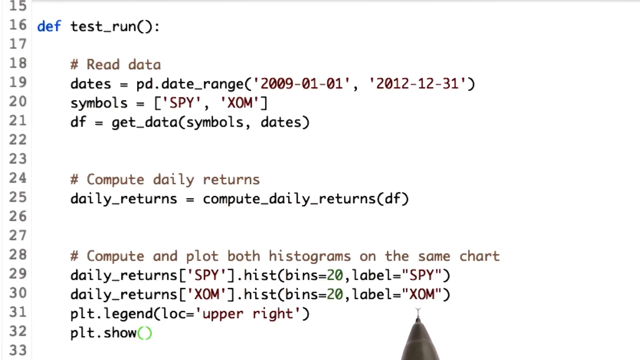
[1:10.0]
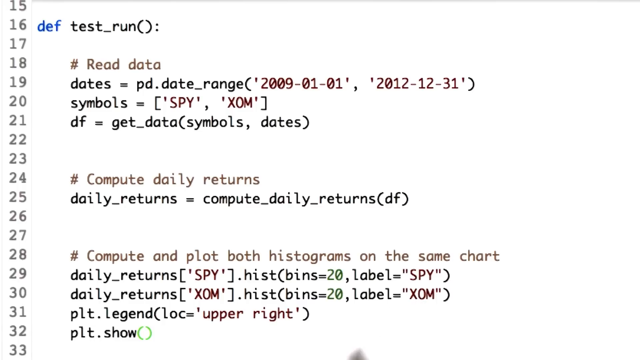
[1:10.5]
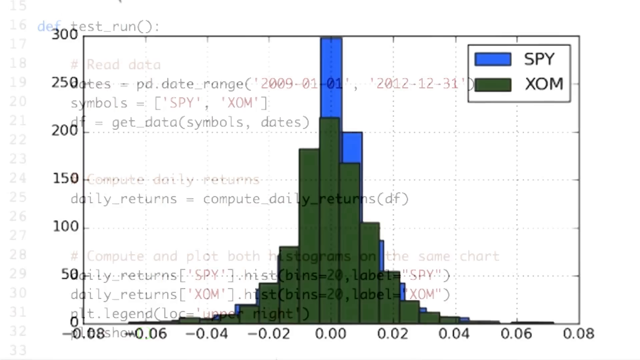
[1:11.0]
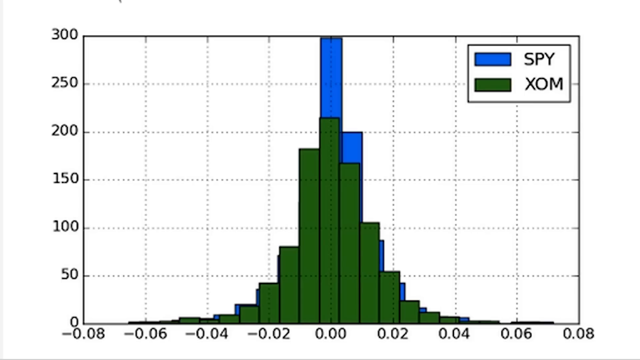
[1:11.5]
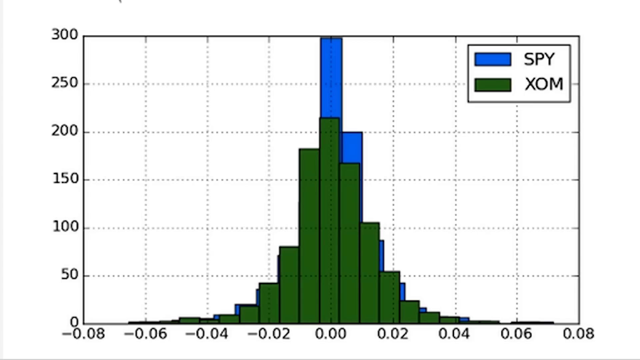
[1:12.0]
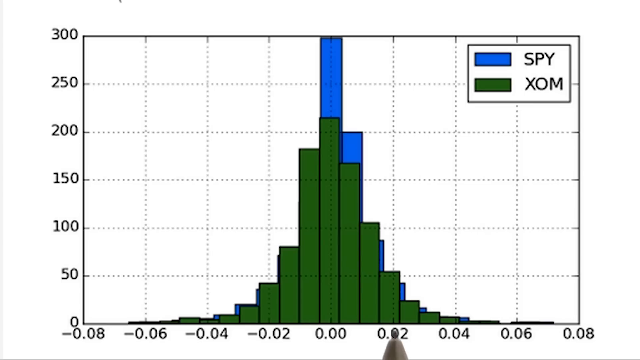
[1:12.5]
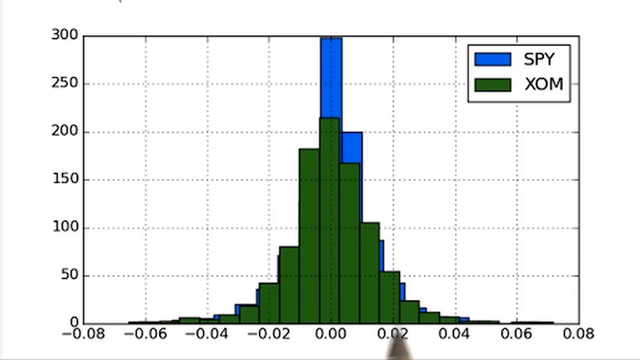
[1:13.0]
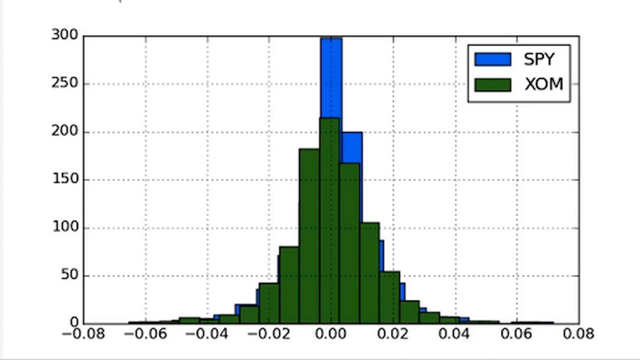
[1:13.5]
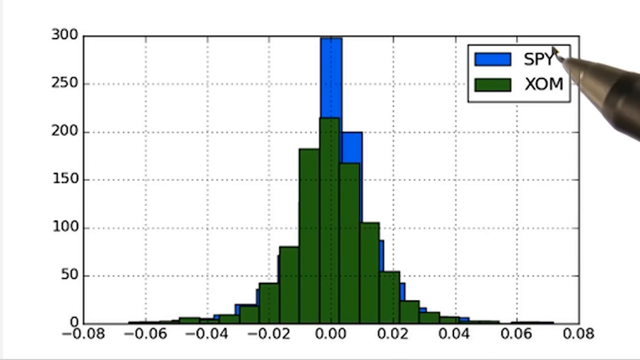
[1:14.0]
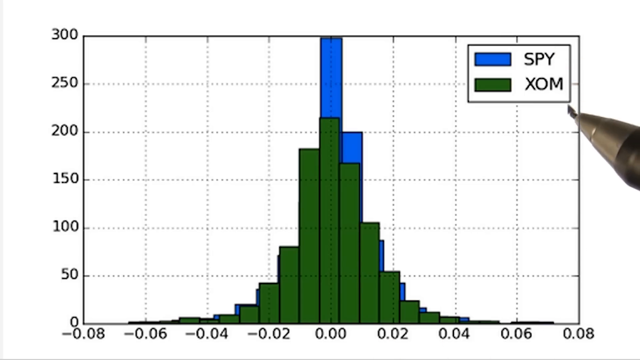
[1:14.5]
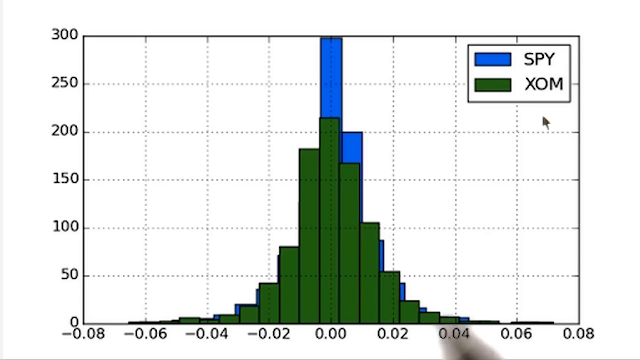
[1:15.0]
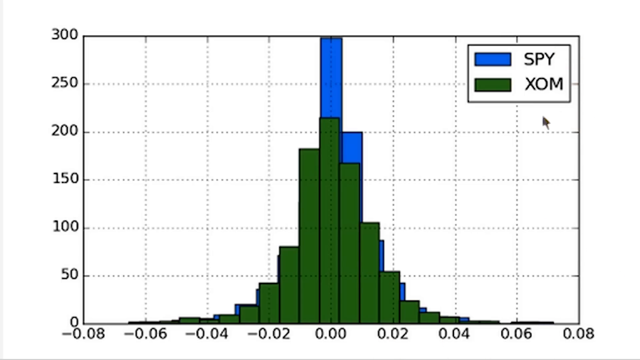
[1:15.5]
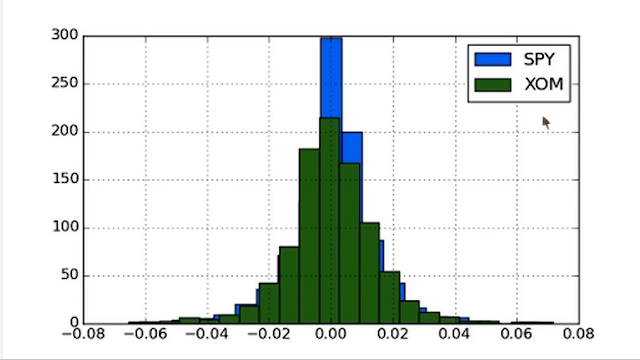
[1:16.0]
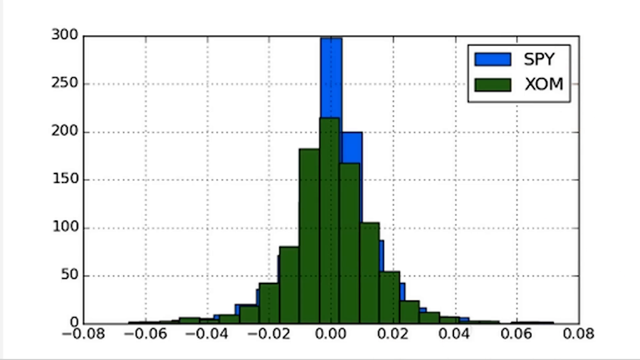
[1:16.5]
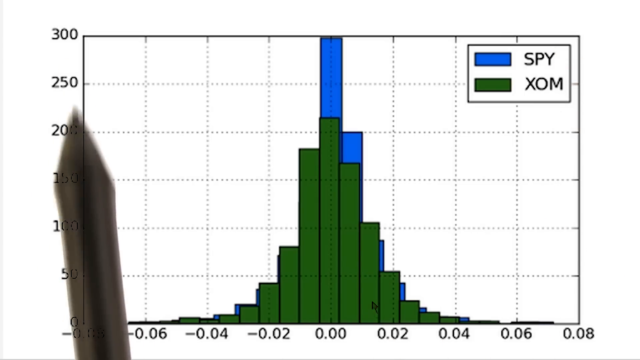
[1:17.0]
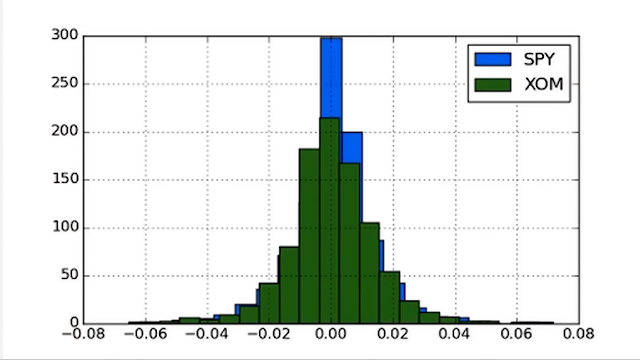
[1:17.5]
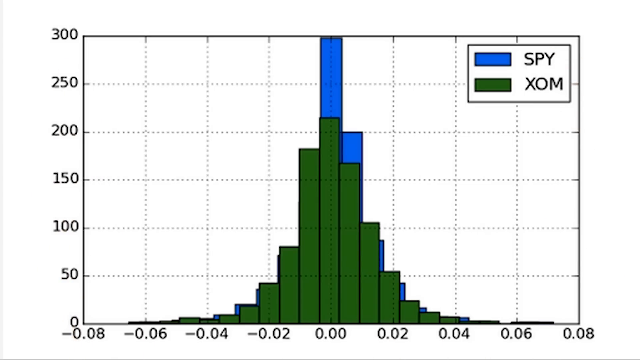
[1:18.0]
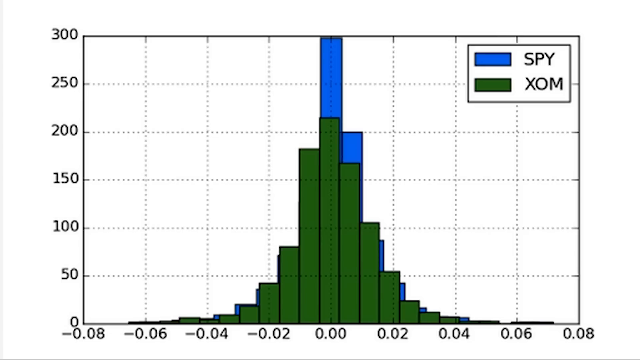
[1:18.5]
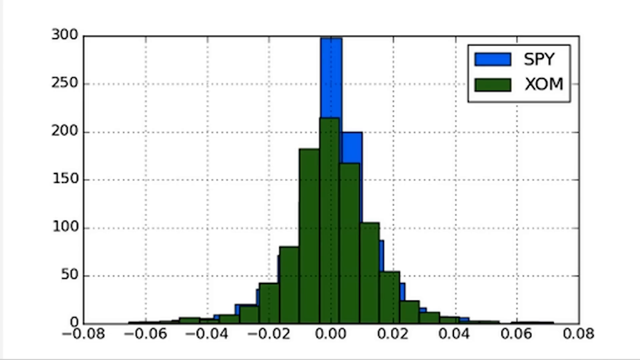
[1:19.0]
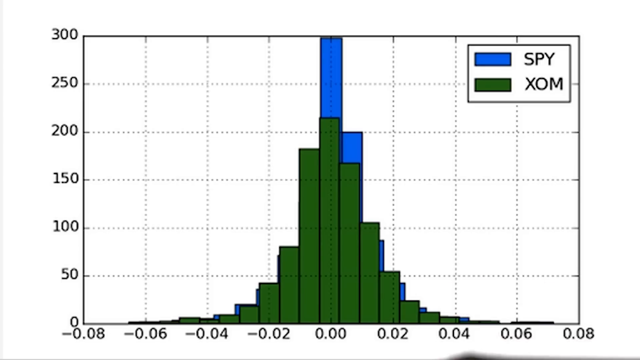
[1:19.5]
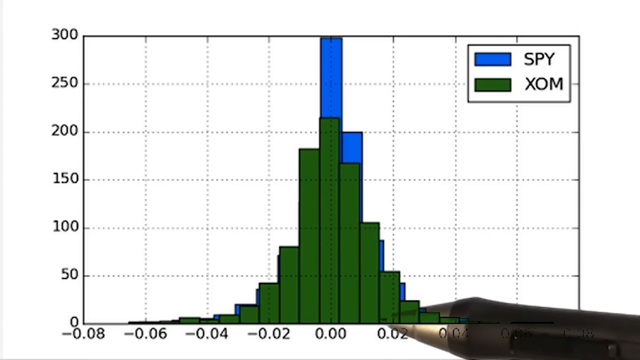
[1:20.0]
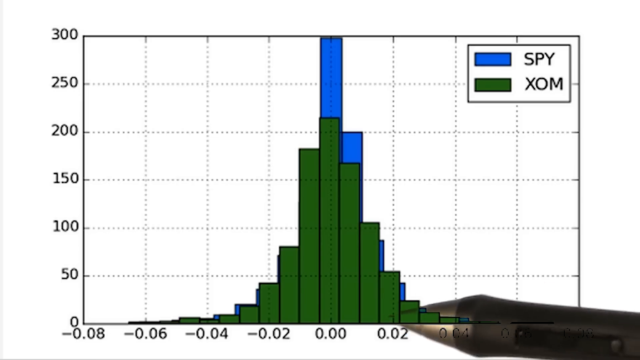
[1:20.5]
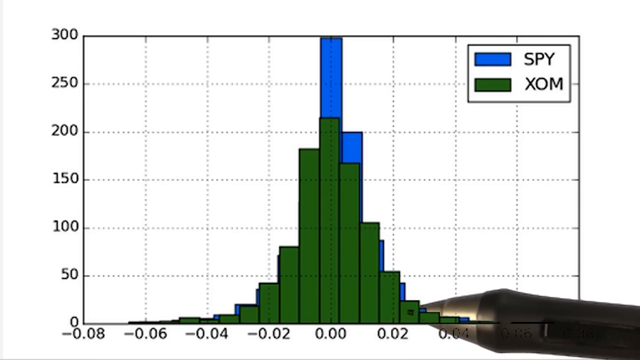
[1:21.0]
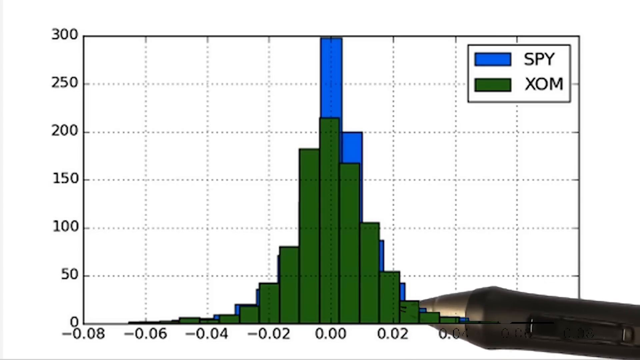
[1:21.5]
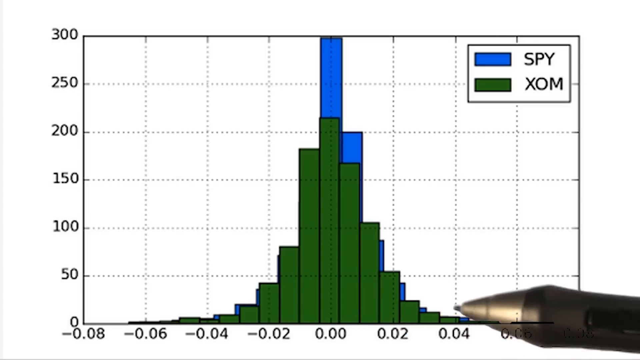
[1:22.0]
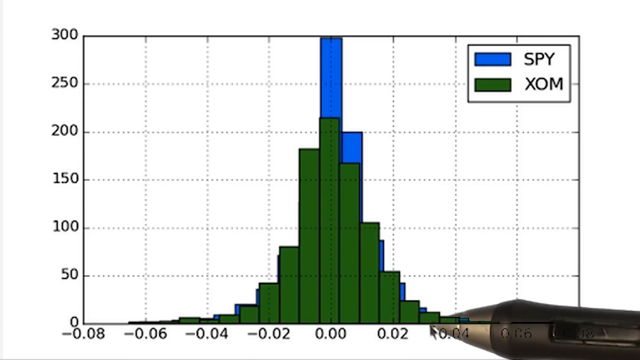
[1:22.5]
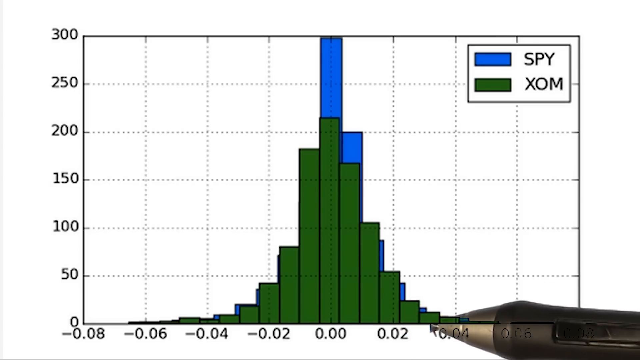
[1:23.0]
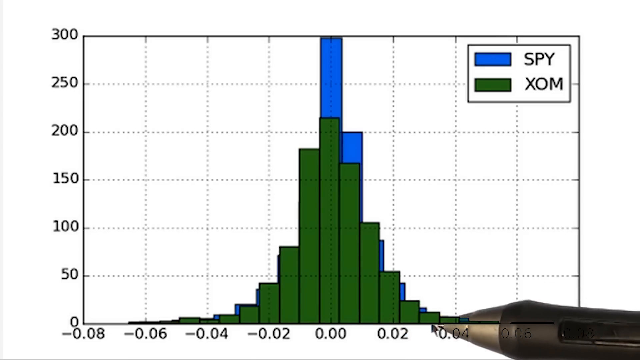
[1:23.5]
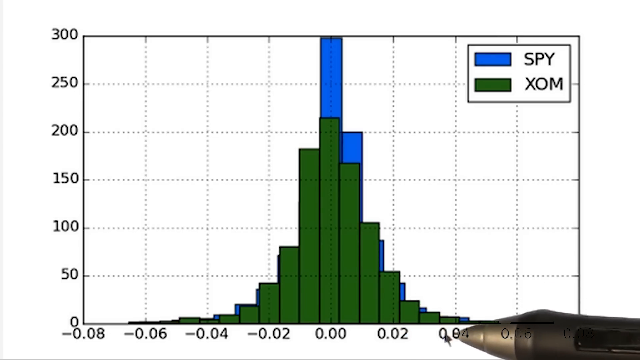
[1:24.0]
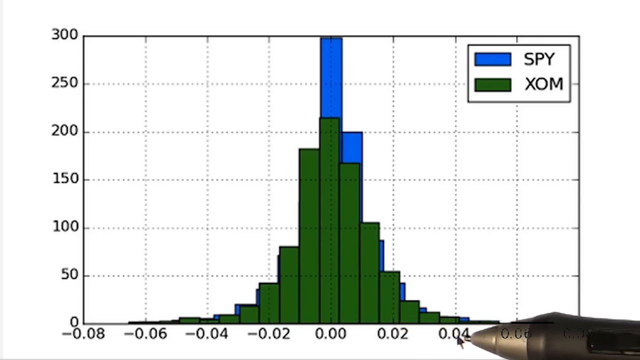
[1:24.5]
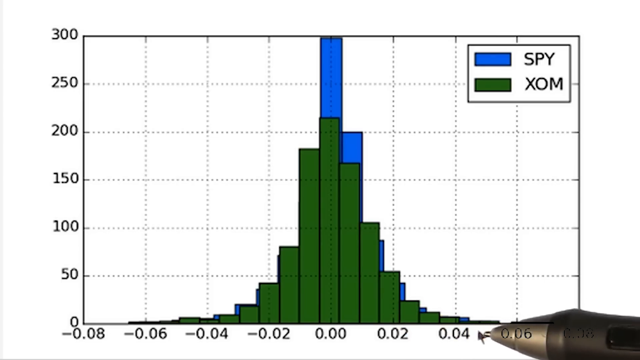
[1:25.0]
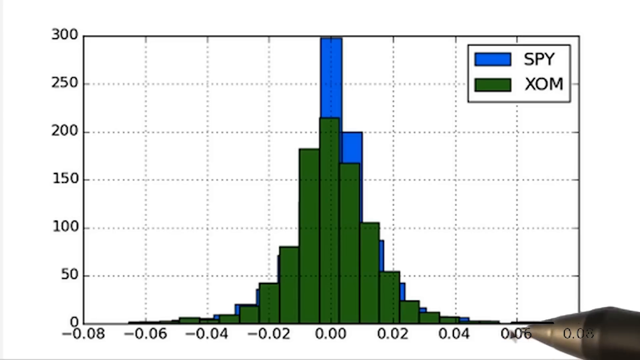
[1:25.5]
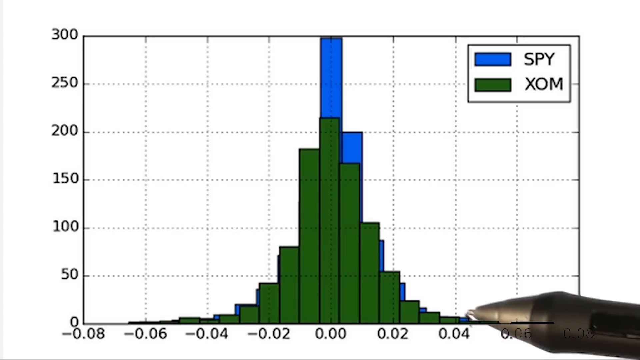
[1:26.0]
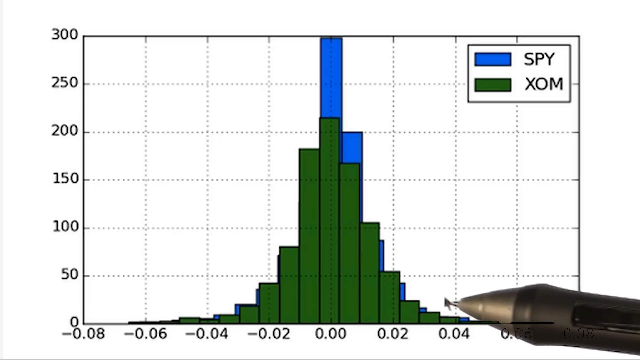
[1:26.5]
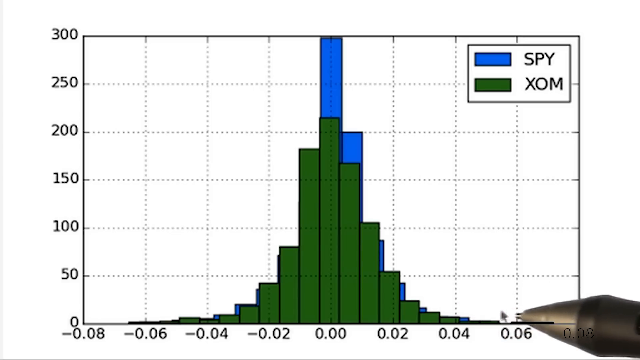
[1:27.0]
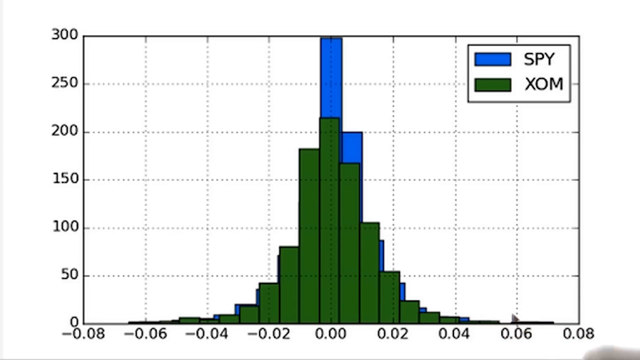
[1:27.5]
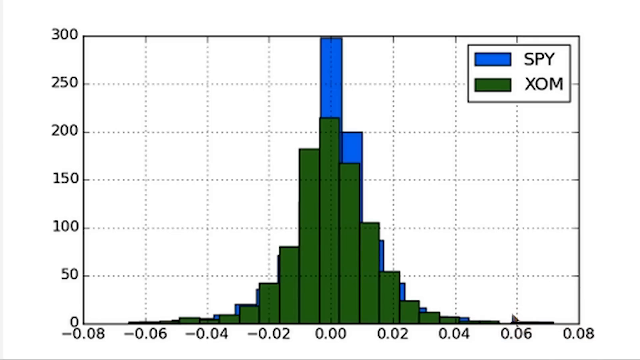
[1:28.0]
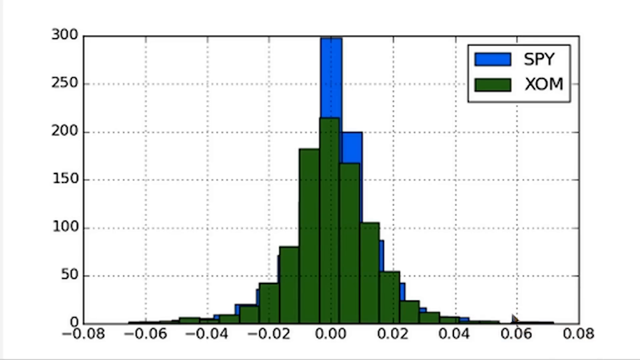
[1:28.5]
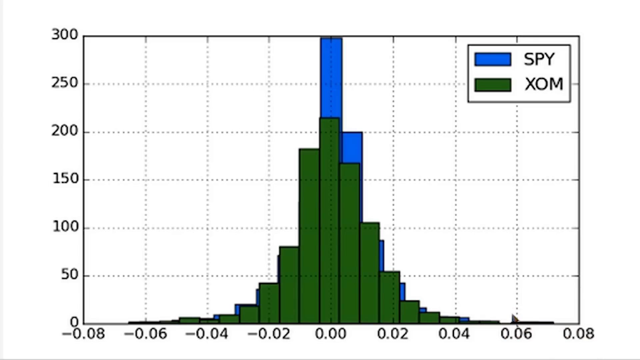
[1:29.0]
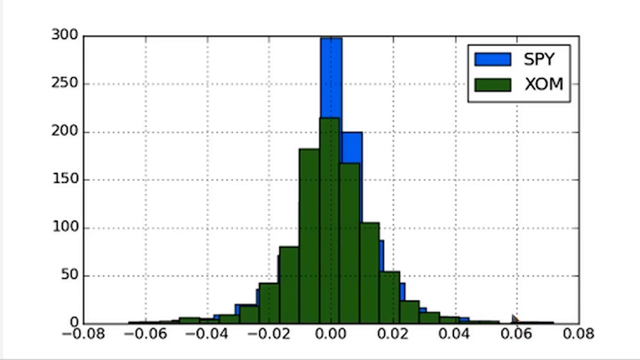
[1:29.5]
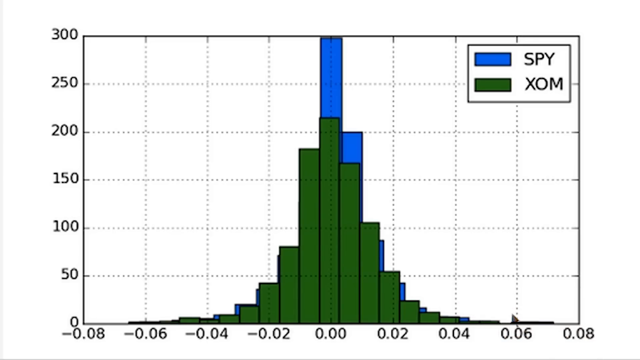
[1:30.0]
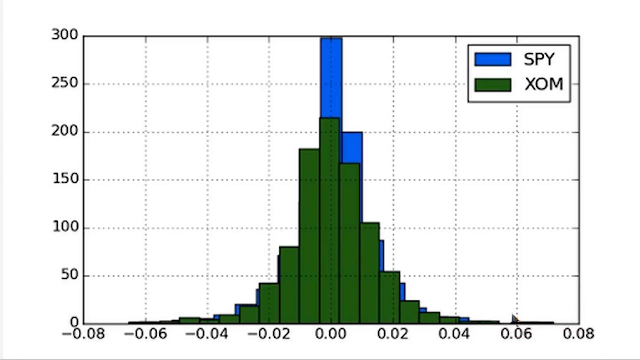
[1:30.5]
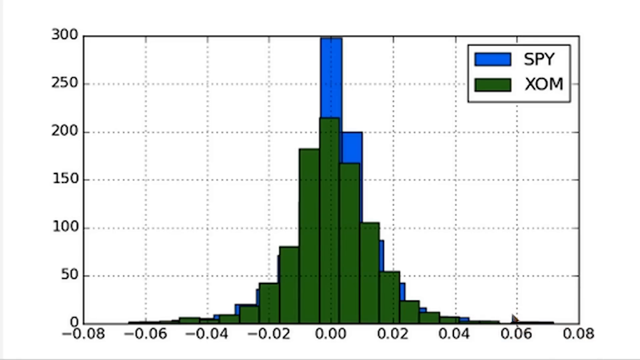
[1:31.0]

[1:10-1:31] The coding screen is shown, with one line of the code reading "compute and plots both histograms on the same chart". The code screen fades out to a chart with two histograms on the same chart, apparently the result of that code. A royal blue histogram has a dark green histogram laid over it. In the top right, a legend labels the royal blue one as SPY and the dark green one as XOM. The horizontal axis ranges from -0.8 to 0.8 and the vertical axis goes from 0 to 300; everything else is black and white. The SPY histogram goes up higher in the middle, though there is a lot of overlap everywhere else. The person making the video moves their pen around the screen, pointing to different elements, this time moving an arrow cursor around the graph.